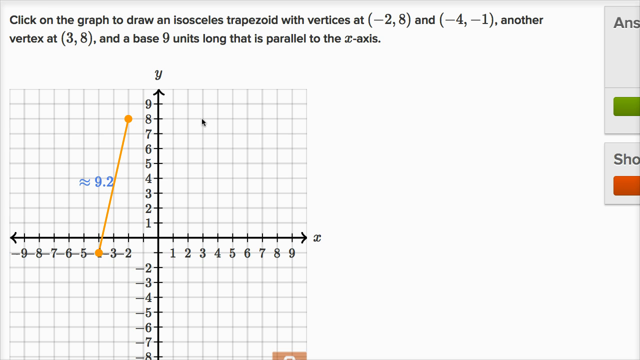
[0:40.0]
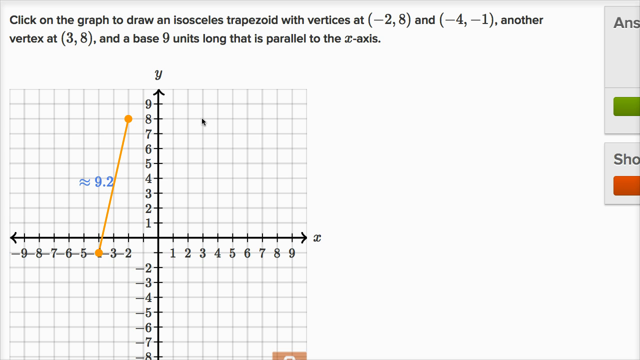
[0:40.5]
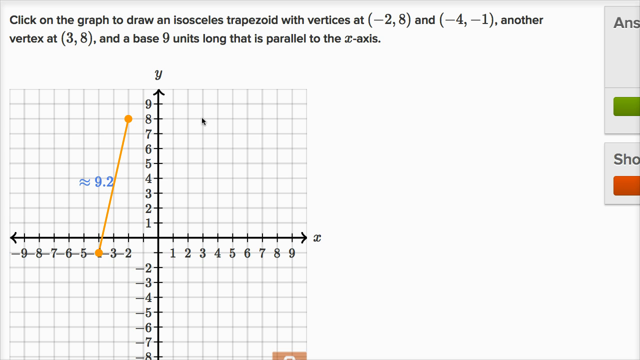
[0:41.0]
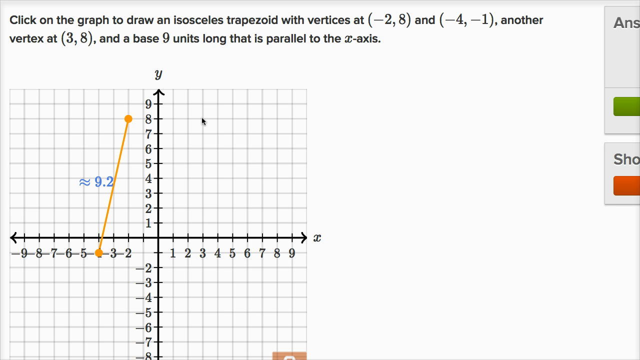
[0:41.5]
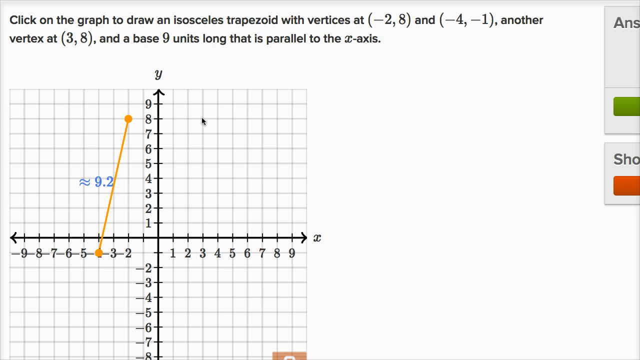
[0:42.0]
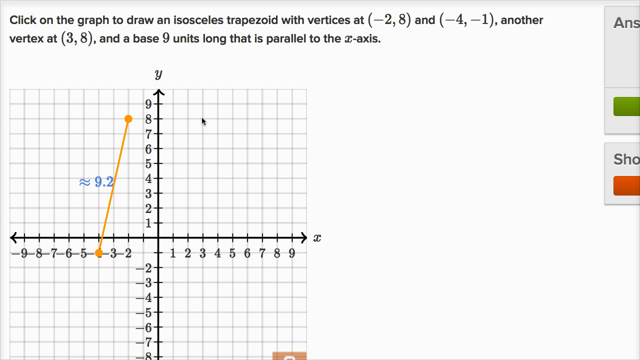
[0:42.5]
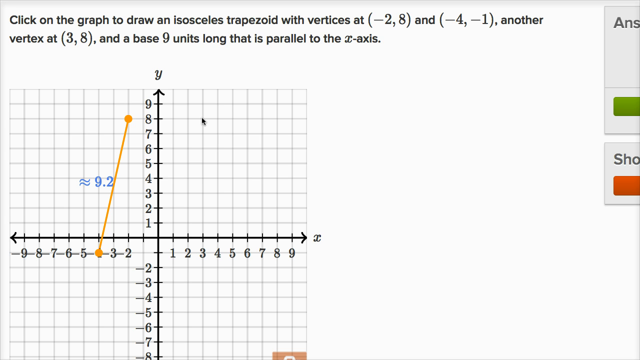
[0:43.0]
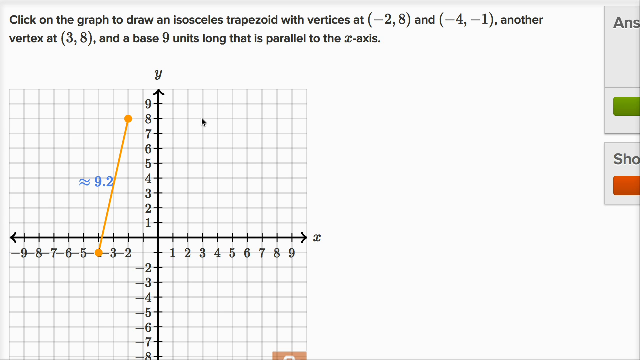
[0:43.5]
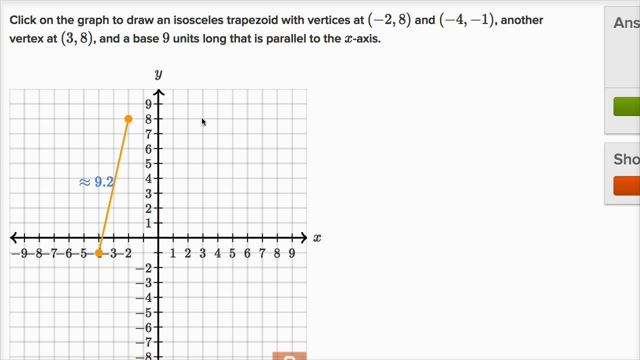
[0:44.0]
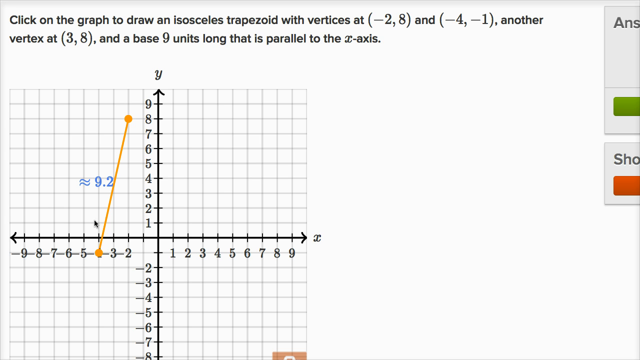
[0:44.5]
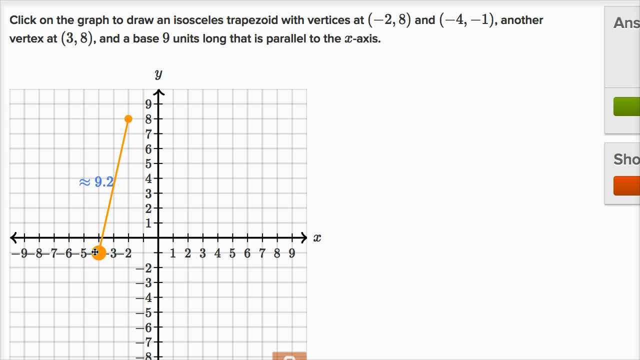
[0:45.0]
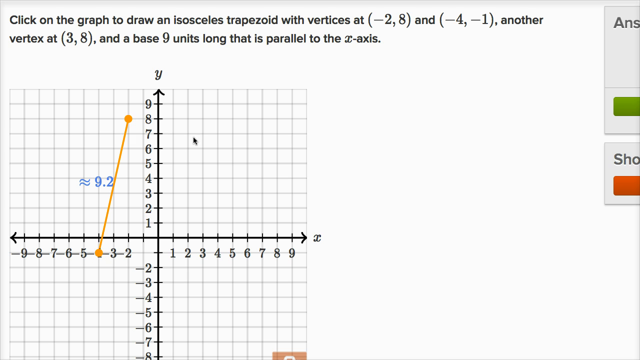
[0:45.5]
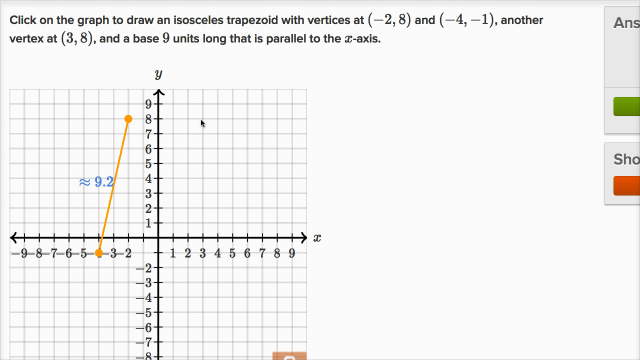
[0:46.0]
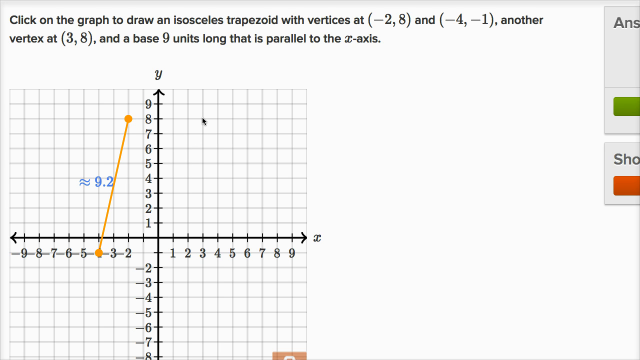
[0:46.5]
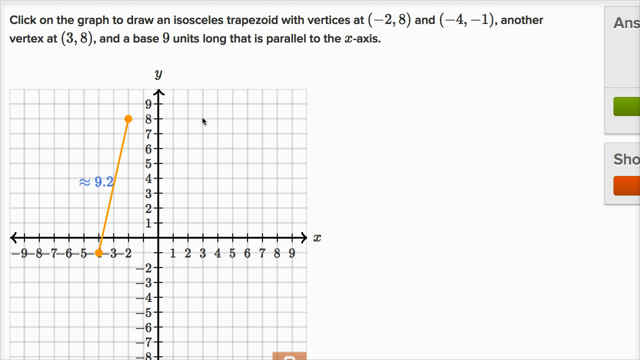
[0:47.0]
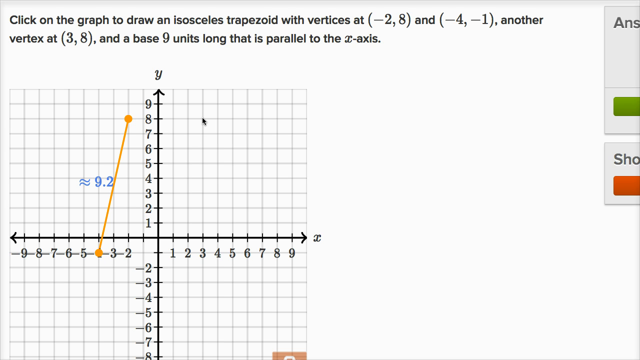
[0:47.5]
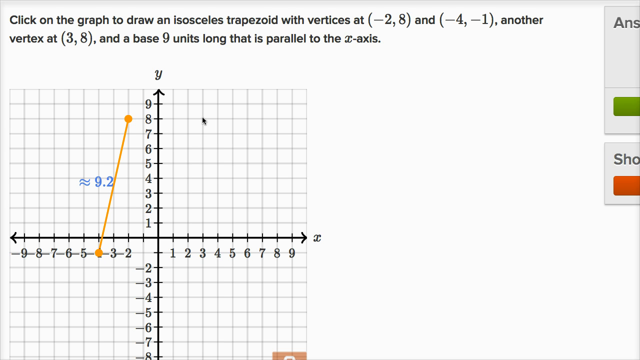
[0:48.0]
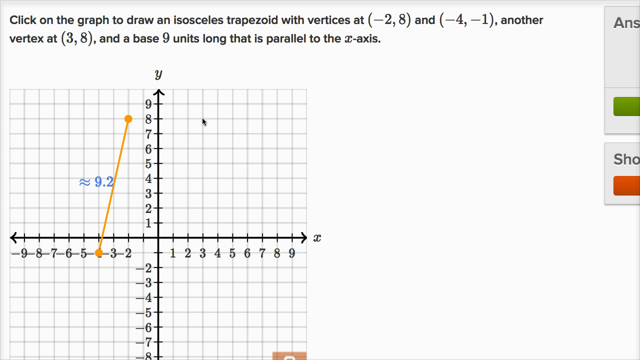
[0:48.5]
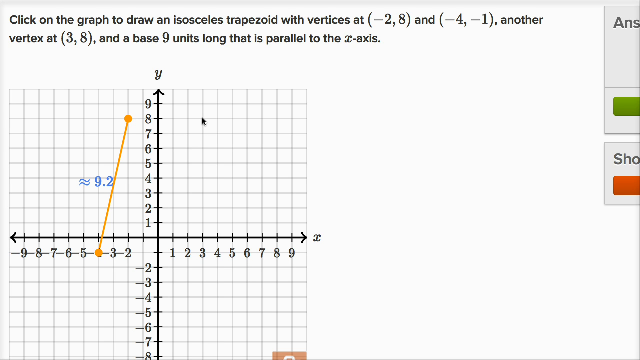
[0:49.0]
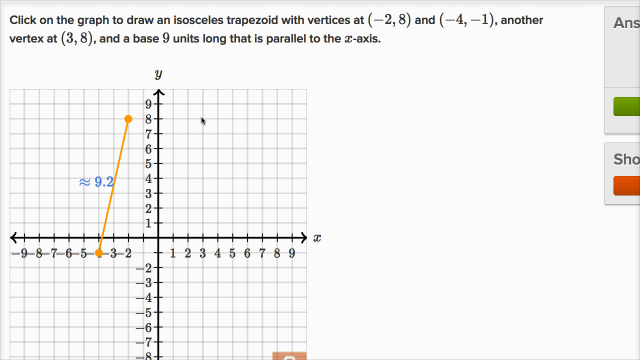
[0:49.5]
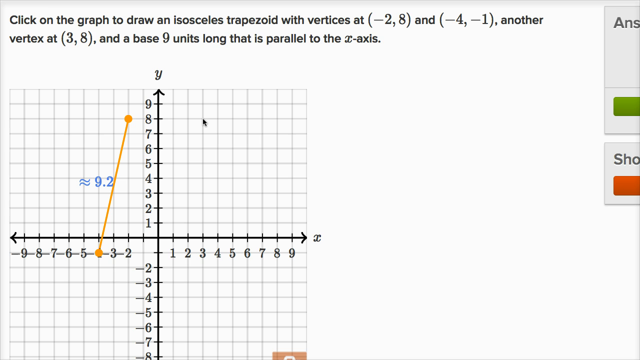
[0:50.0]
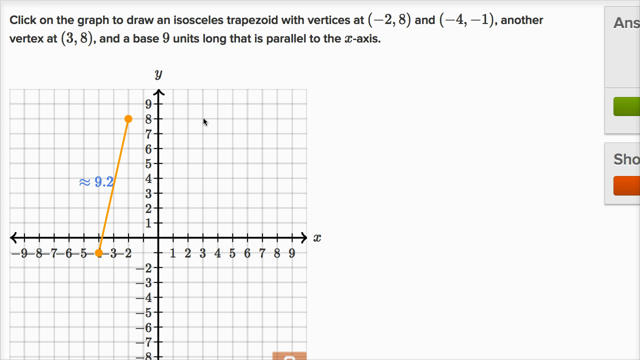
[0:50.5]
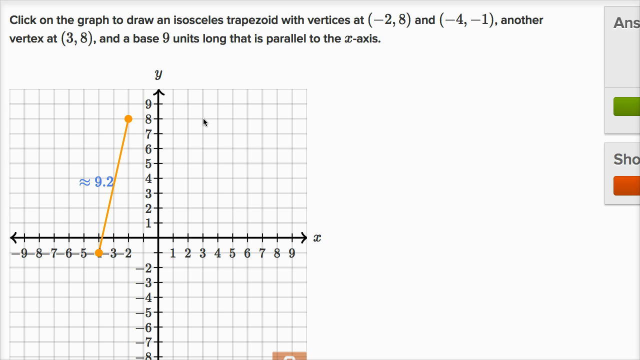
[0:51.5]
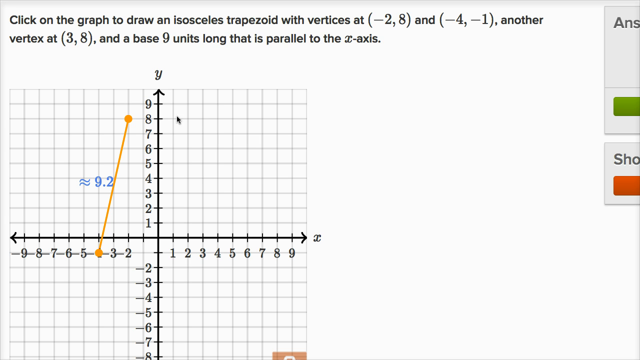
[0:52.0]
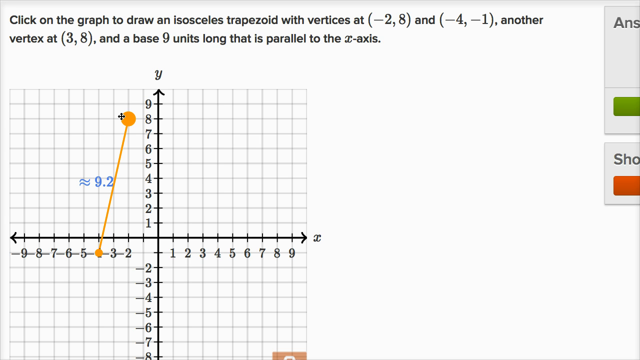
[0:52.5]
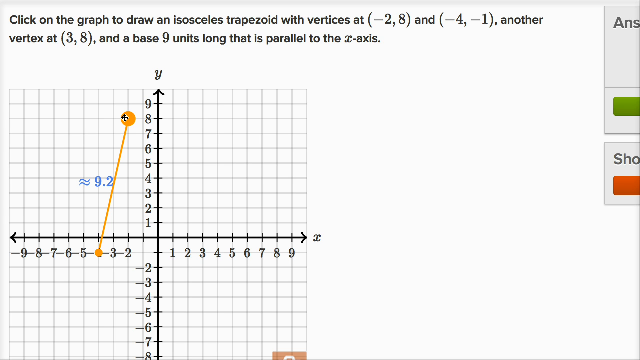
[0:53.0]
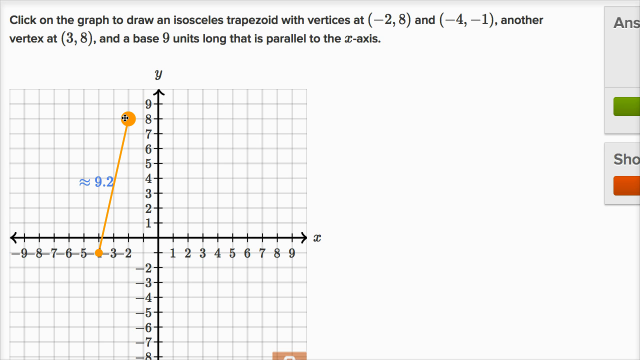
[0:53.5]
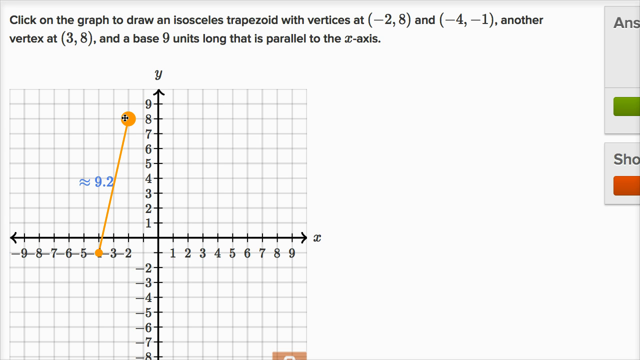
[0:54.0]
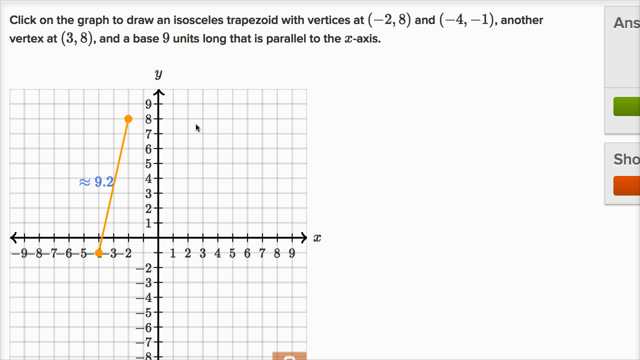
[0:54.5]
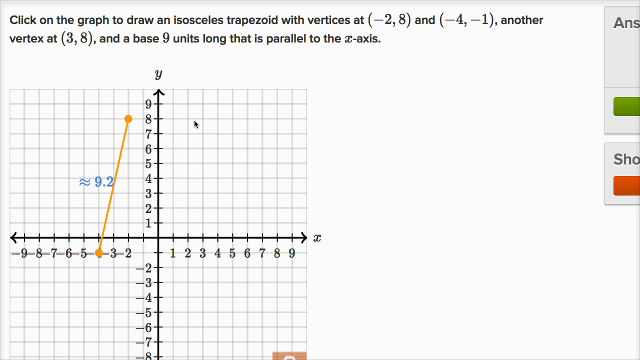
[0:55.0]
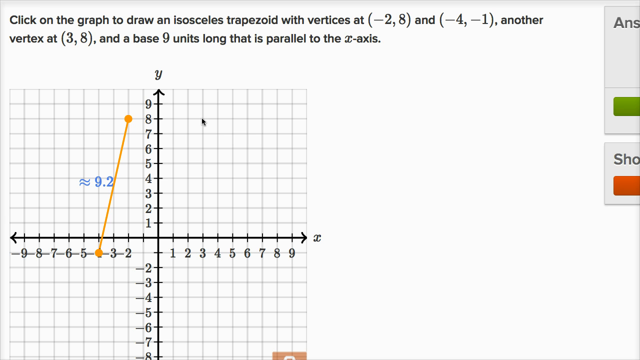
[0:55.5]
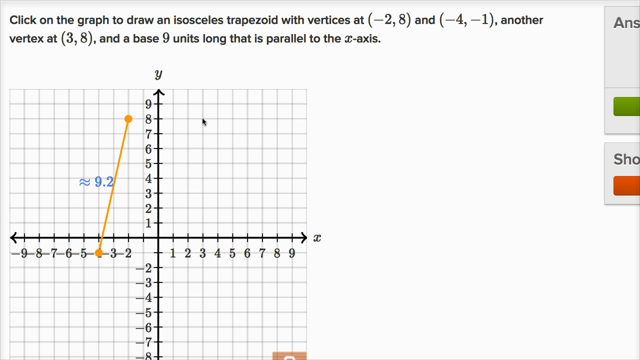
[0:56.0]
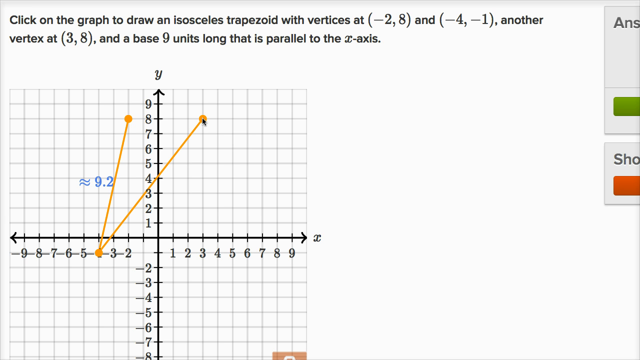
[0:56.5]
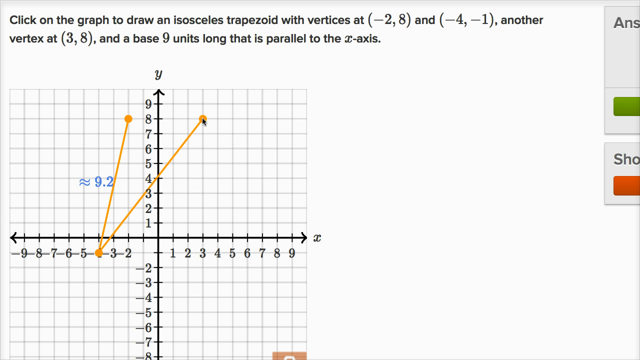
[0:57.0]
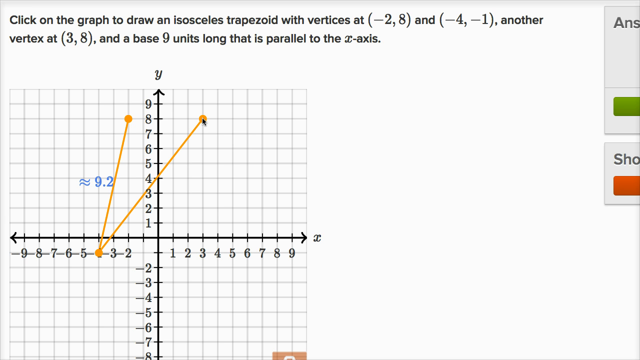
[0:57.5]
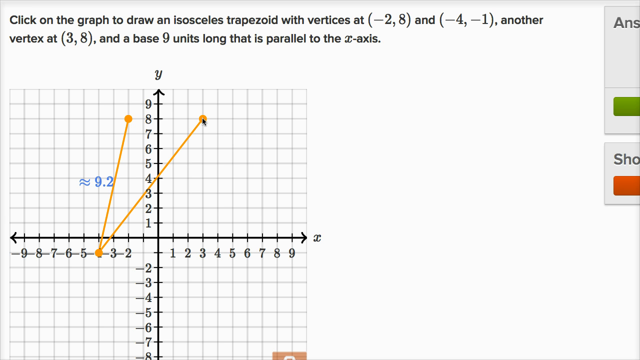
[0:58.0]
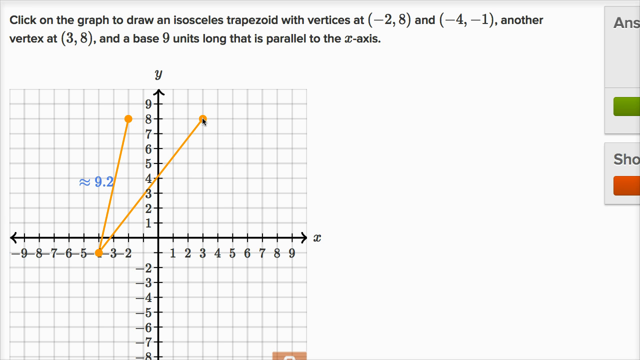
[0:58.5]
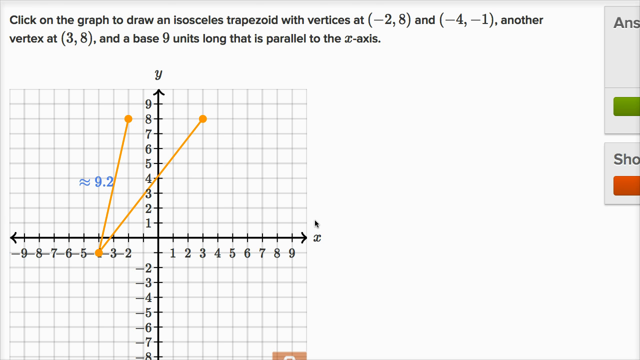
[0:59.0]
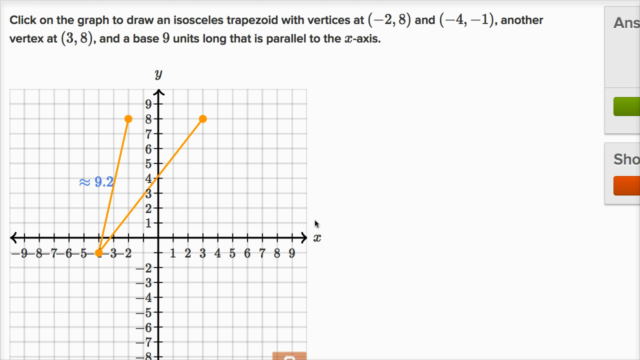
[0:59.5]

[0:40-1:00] The graph is still shown, with an orange line running from the top number 8 down to the bottom number 1. A value of -9.2 is shown. The vertices listed are (-2, 8) and (-4, -1), with another vertex at (3, 8) and a base 9 units long parallel to the x-axis. The instruction to create vertices is in the middle of the graph, and the horizontal axis below has numbers.